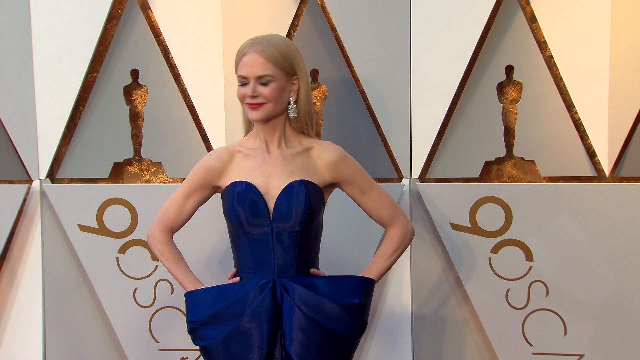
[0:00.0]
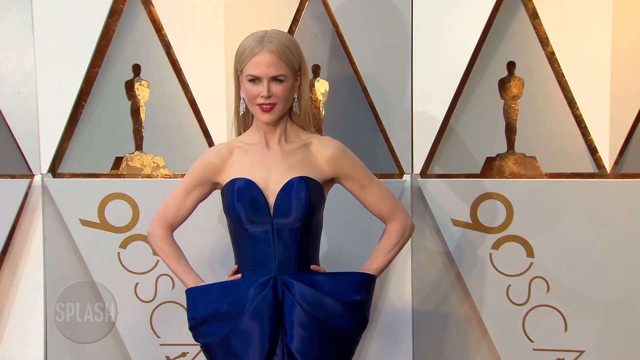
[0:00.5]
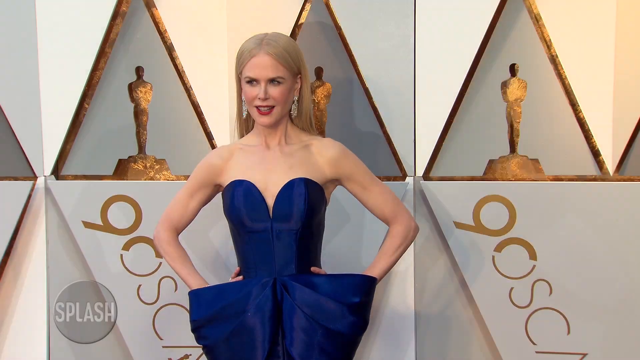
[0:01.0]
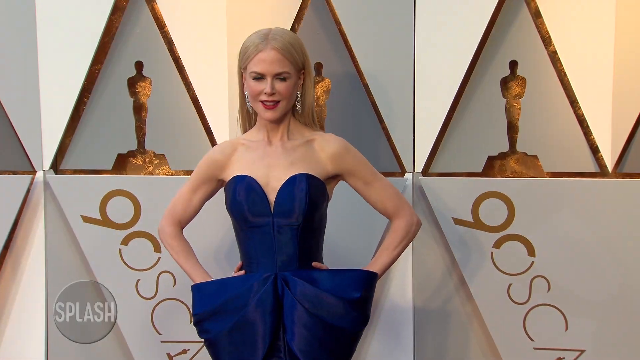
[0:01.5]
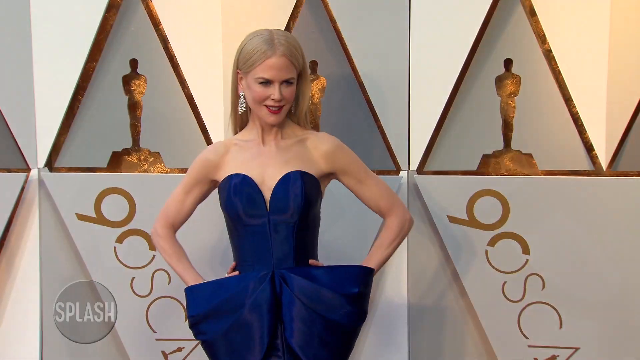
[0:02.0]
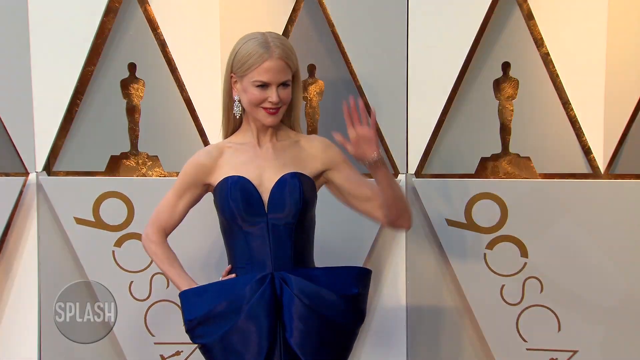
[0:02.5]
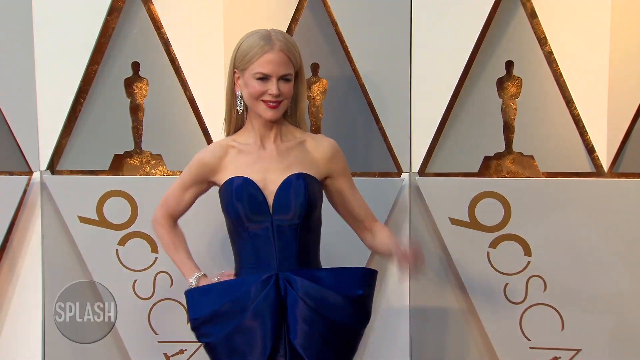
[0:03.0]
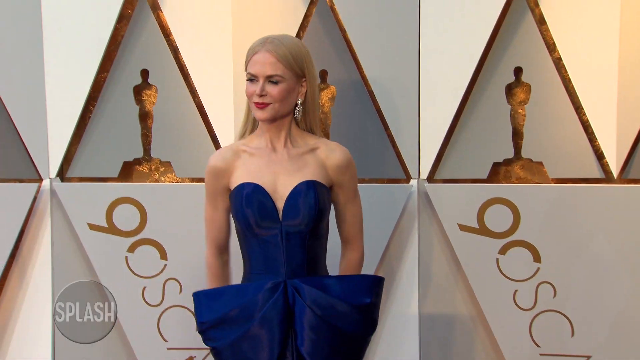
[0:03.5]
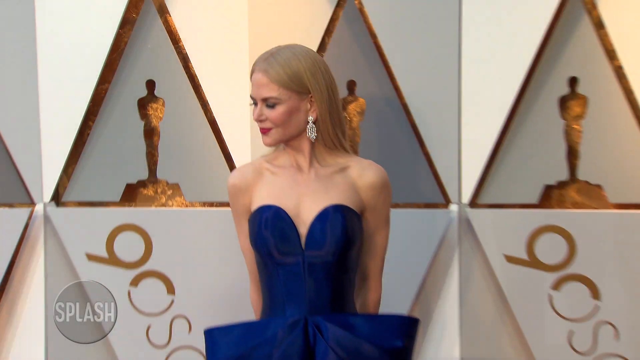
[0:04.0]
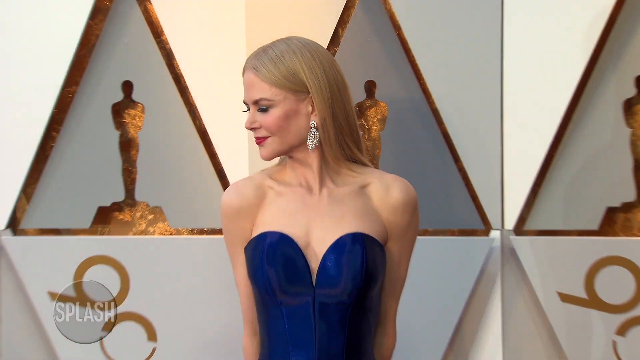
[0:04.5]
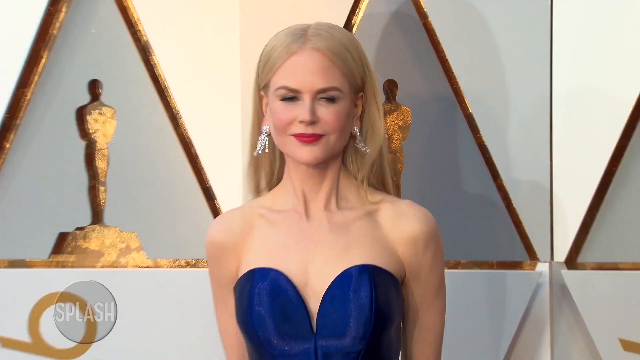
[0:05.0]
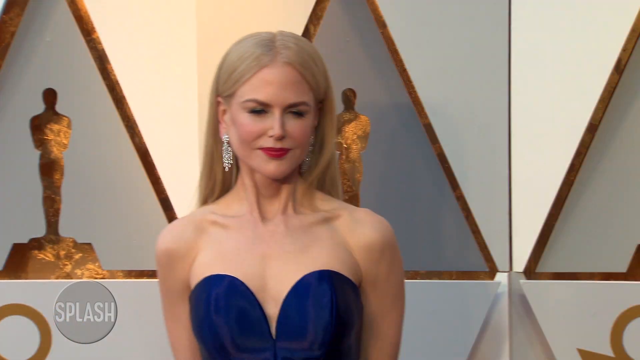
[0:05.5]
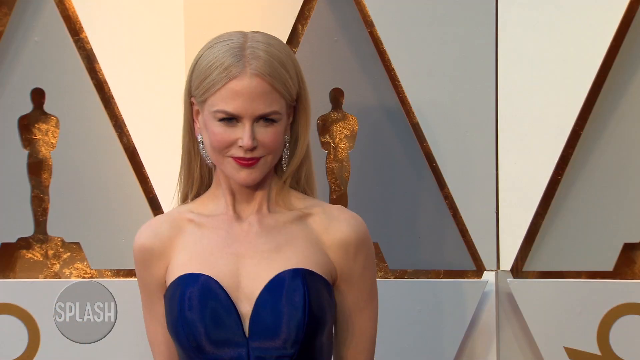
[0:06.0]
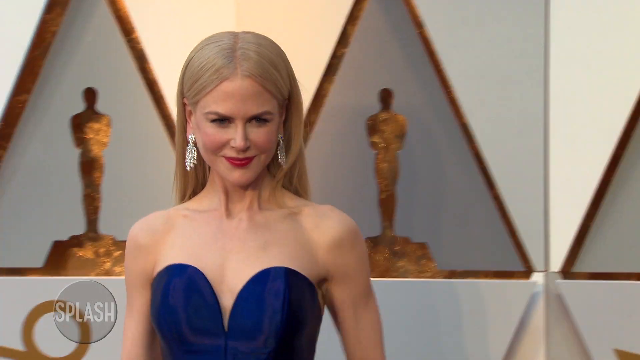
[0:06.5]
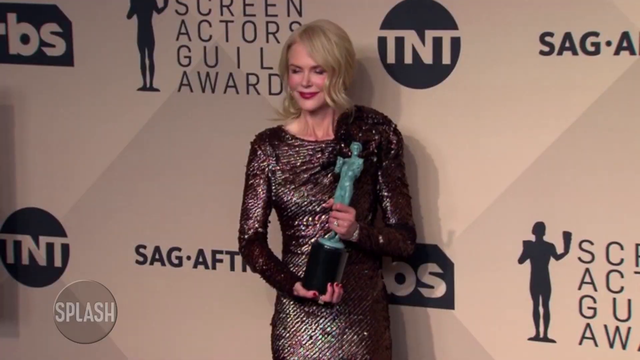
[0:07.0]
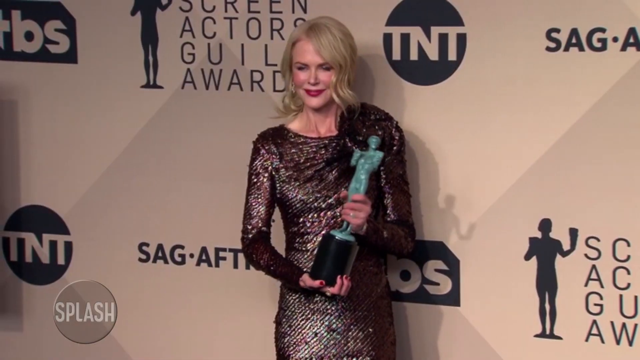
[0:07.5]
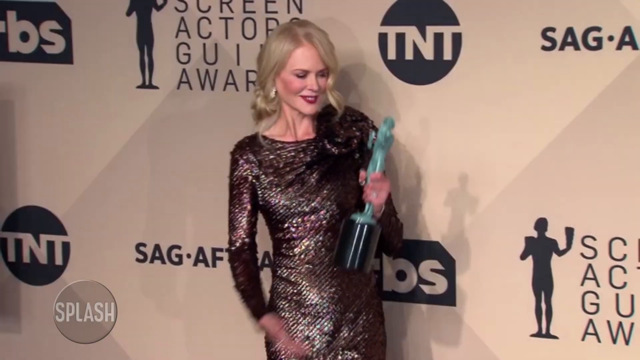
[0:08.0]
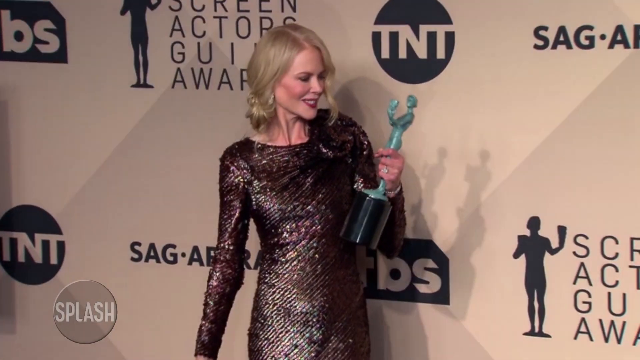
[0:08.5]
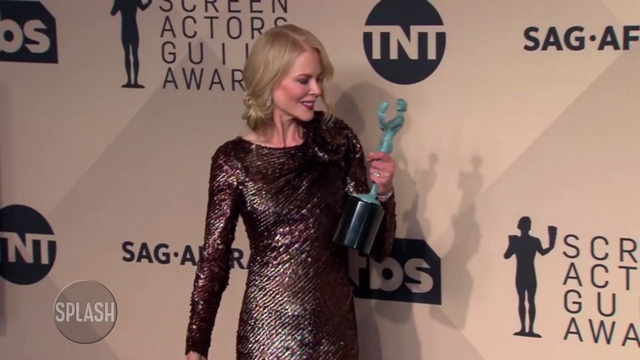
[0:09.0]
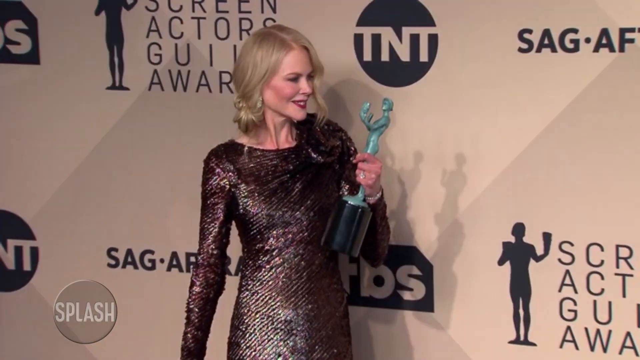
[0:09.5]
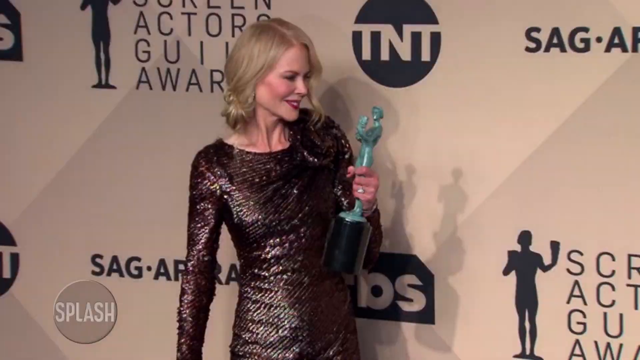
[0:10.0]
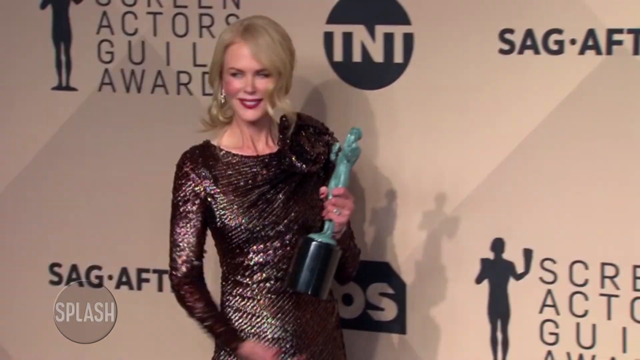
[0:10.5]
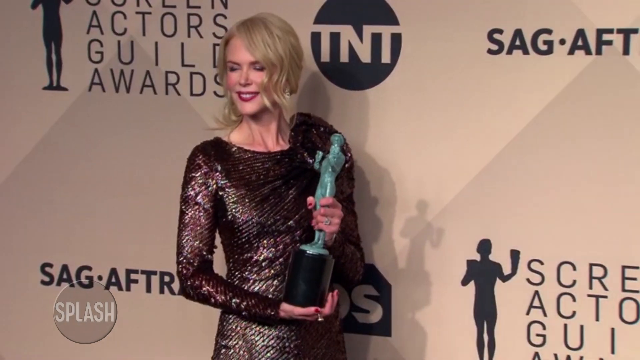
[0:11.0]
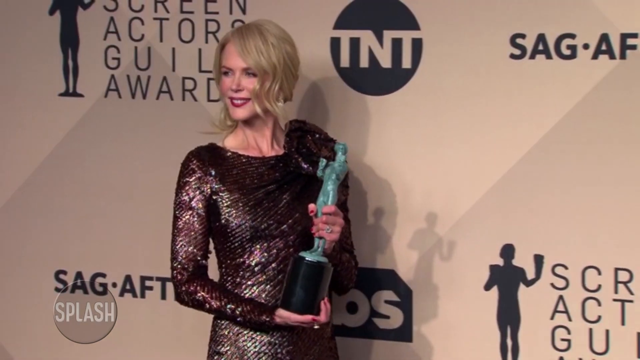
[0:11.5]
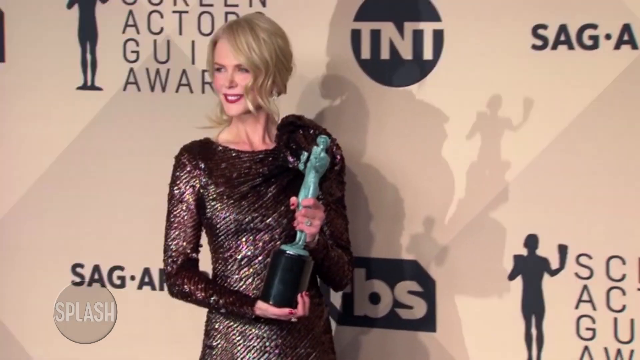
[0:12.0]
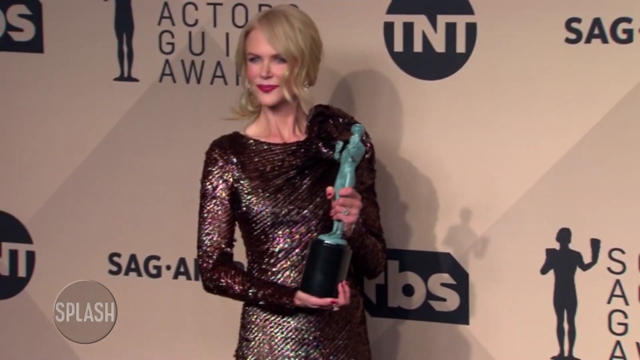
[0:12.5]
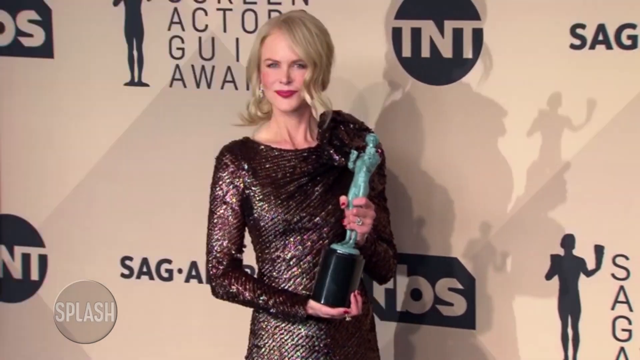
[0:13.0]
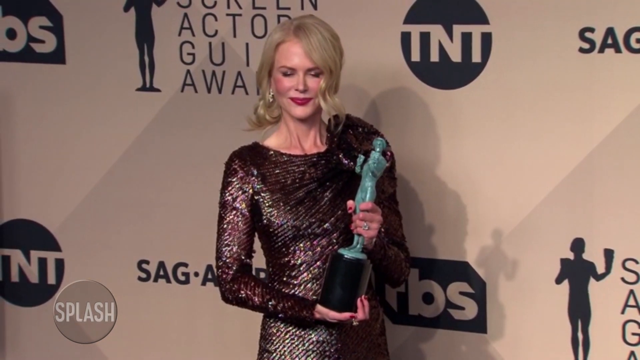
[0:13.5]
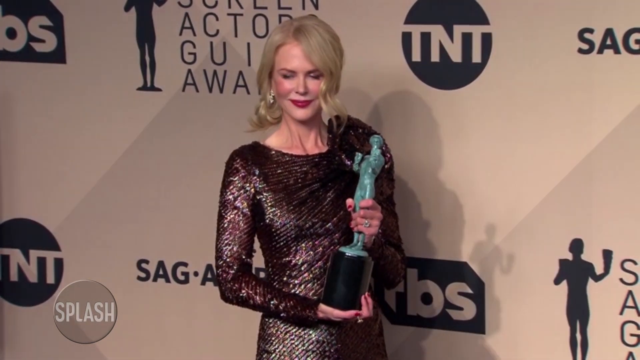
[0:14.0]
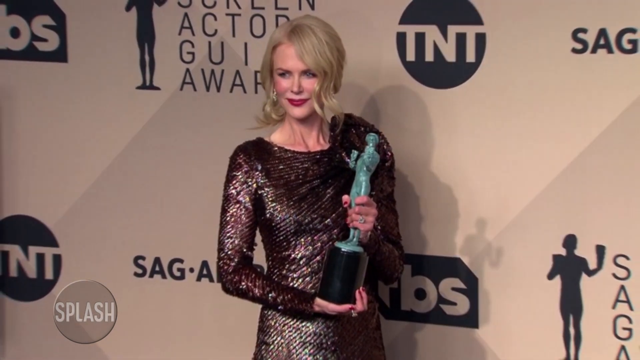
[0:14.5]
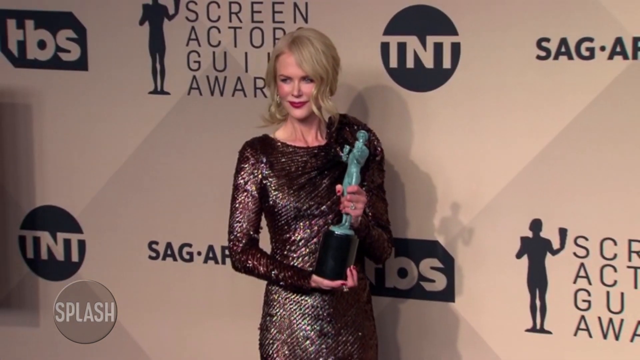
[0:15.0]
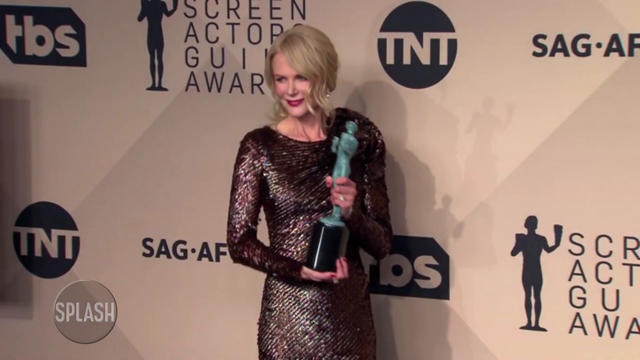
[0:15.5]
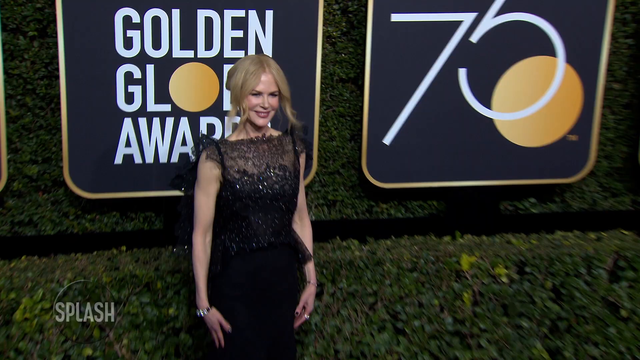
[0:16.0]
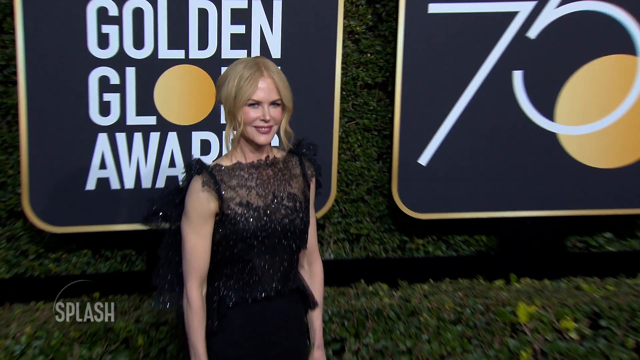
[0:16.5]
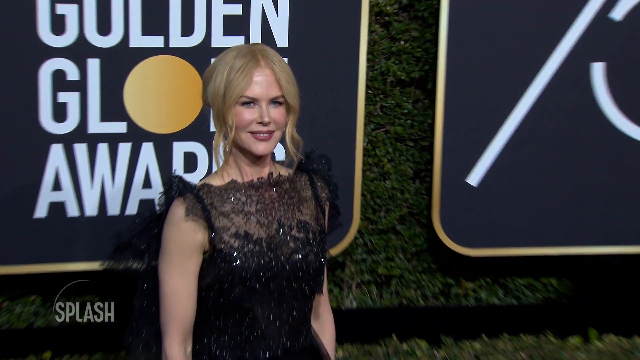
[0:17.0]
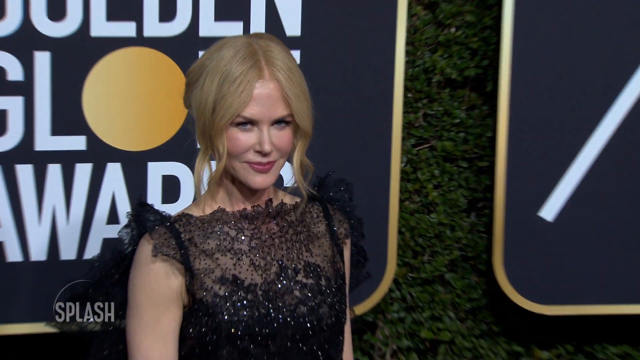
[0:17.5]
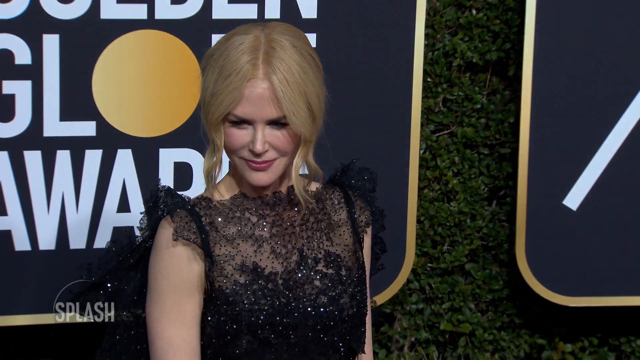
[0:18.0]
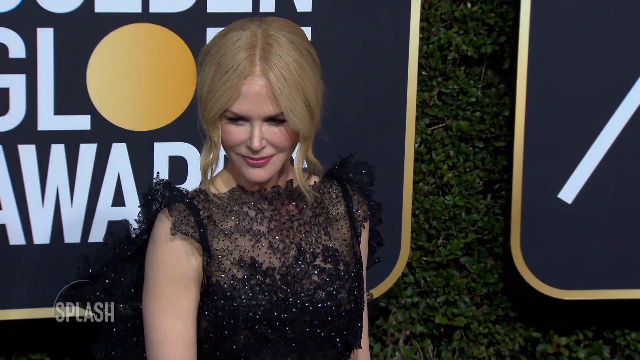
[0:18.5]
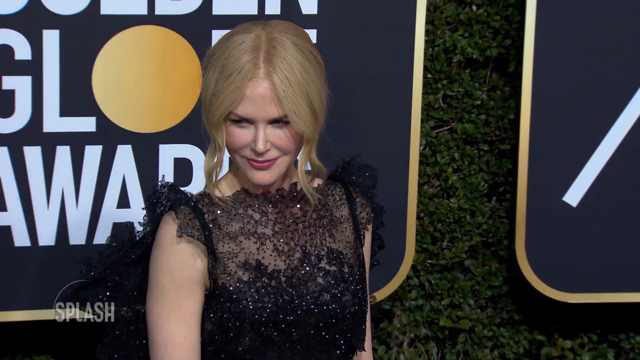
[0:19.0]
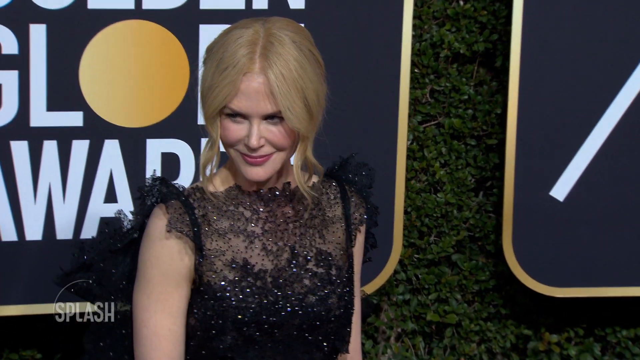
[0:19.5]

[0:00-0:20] A young woman in a well-decorated blue dress stands in front of a wall decorated with images of creatures, posing for the video. In another shot she holds a trophy and wears a shiny silver-like outfit with shiny spots, like those of a cobra; behind her is a wall with advertisements of TNT and TPS and an illustration of a person. The video then focuses on her against another background, where she again poses for a photo while people take videos and cameras focus on her, with camera flashes visible. She wears a black, silver-looking outfit that is very shiny, and she looks beautiful in it.